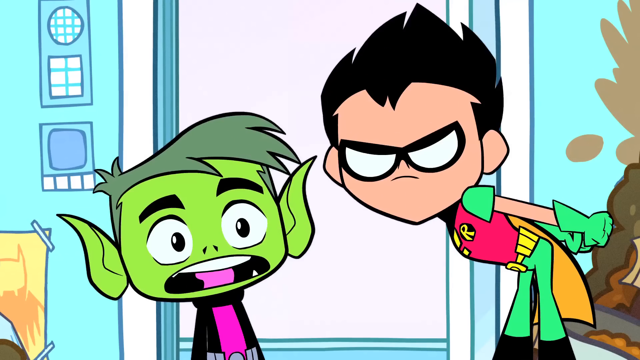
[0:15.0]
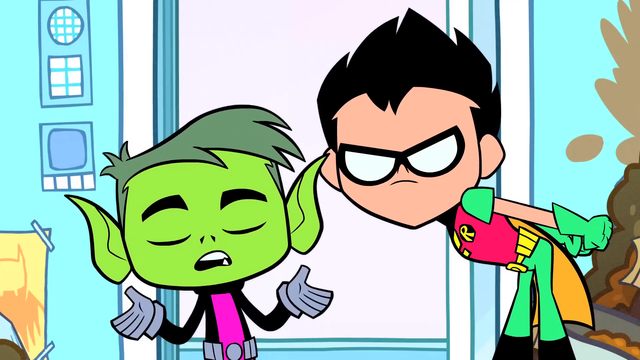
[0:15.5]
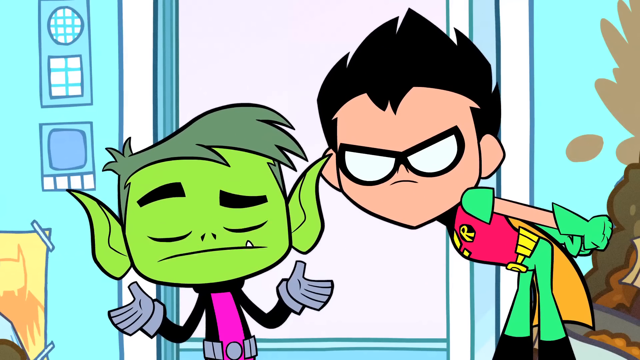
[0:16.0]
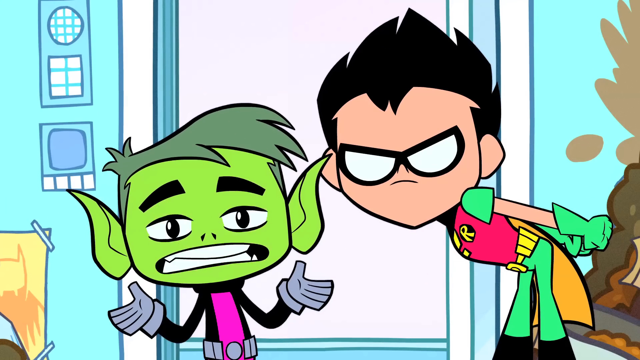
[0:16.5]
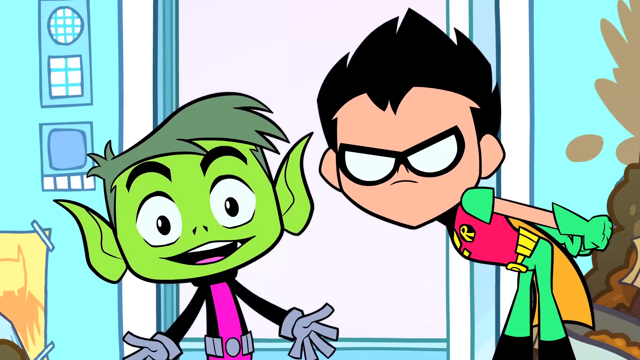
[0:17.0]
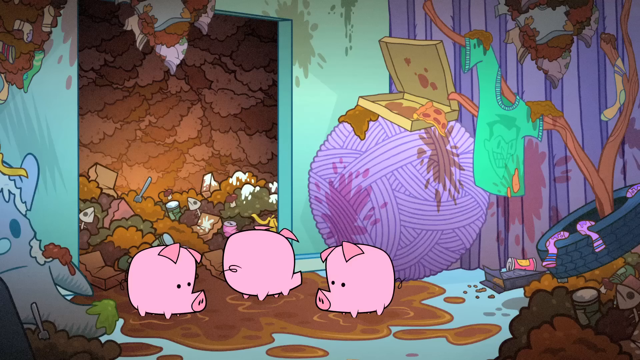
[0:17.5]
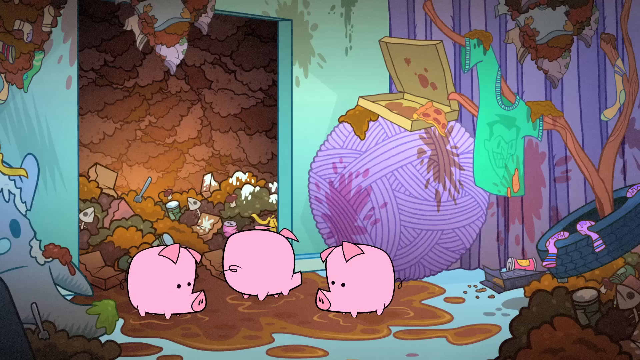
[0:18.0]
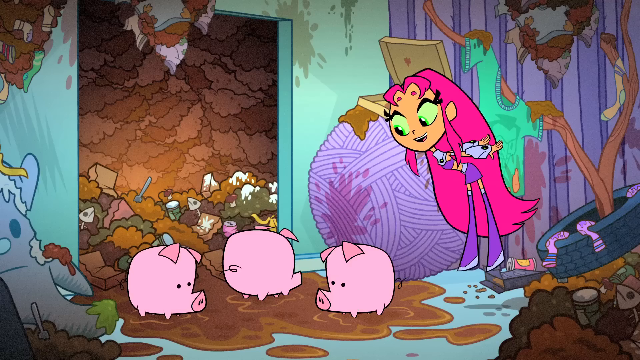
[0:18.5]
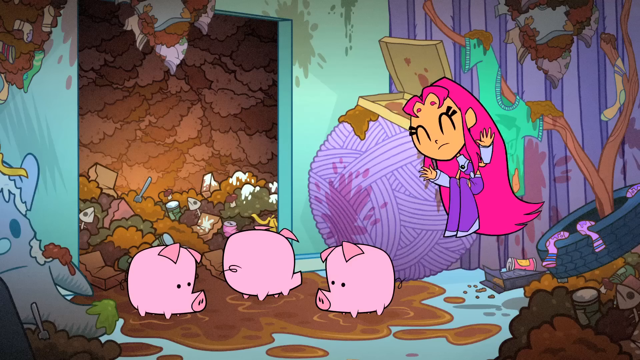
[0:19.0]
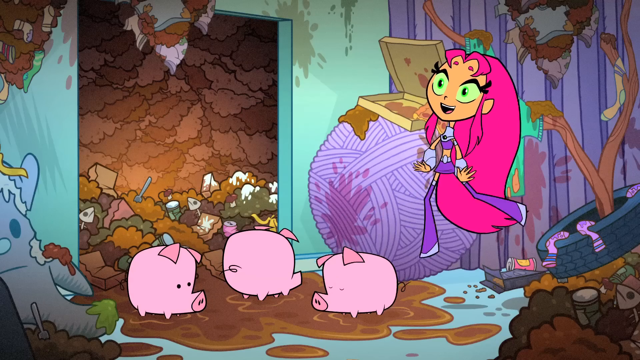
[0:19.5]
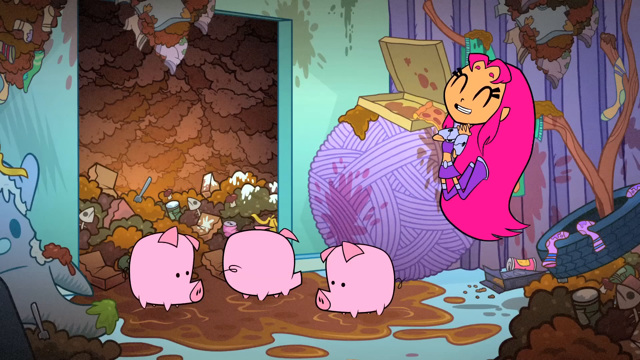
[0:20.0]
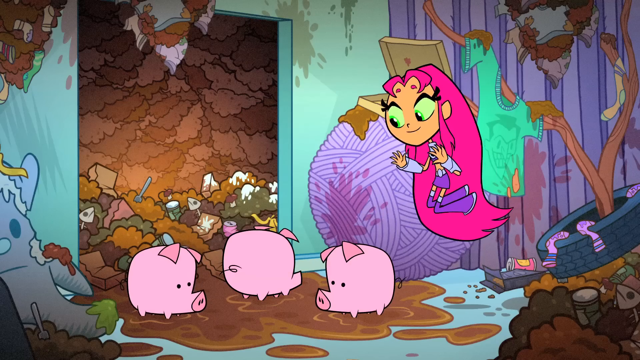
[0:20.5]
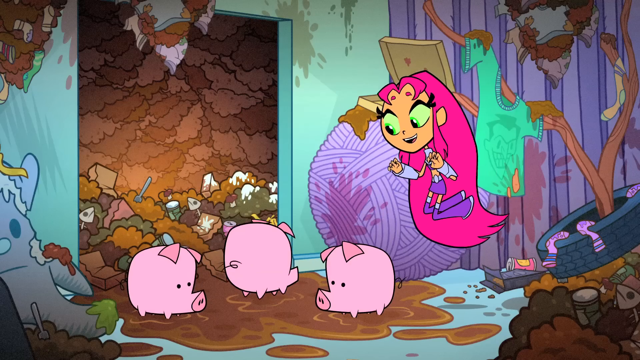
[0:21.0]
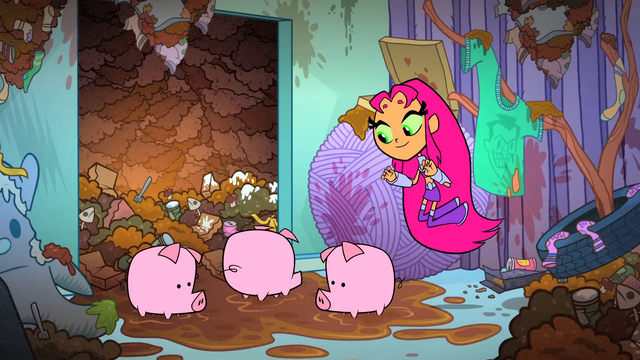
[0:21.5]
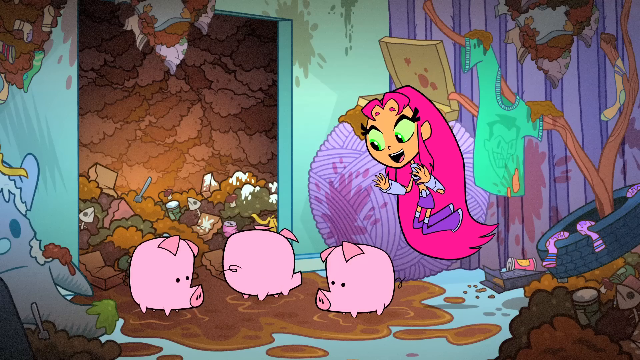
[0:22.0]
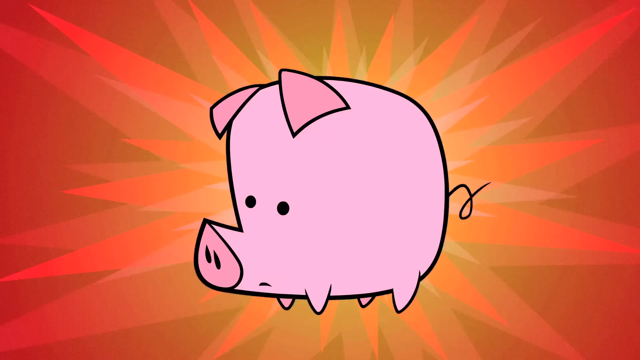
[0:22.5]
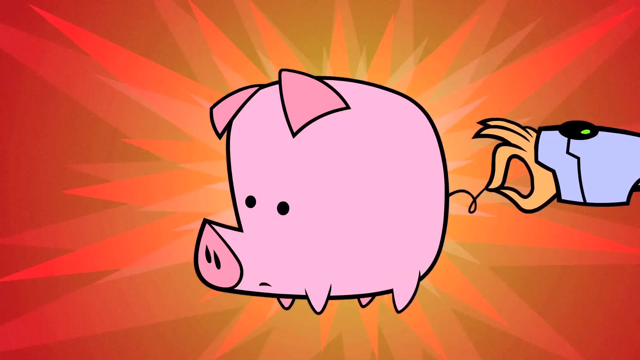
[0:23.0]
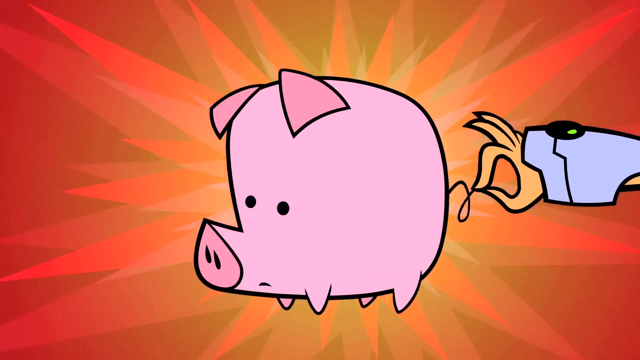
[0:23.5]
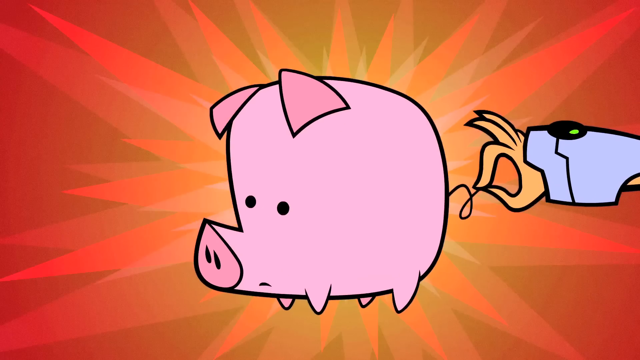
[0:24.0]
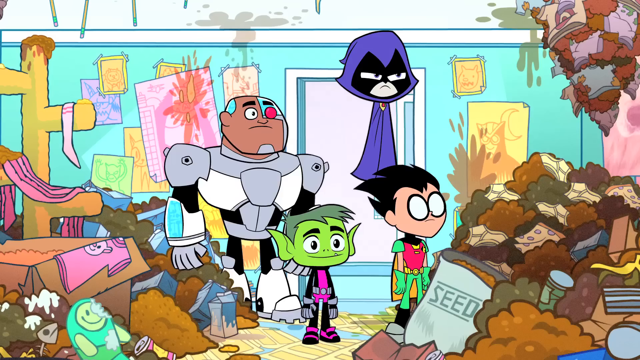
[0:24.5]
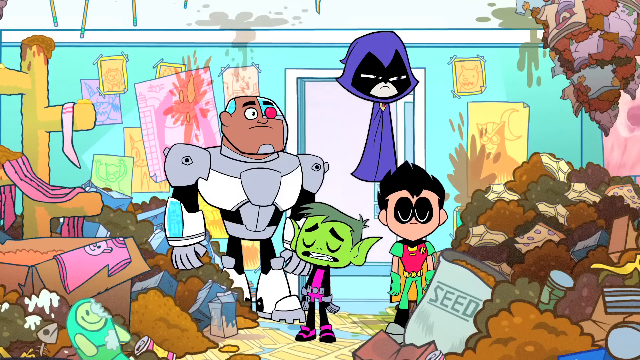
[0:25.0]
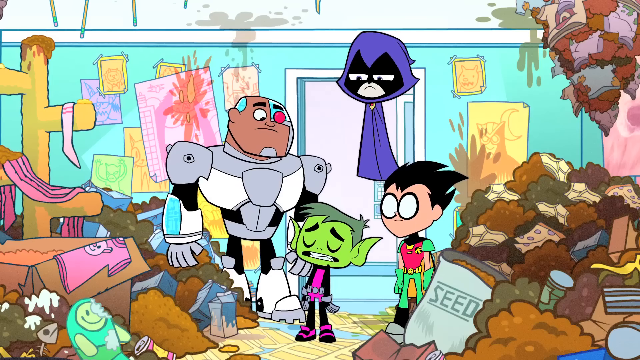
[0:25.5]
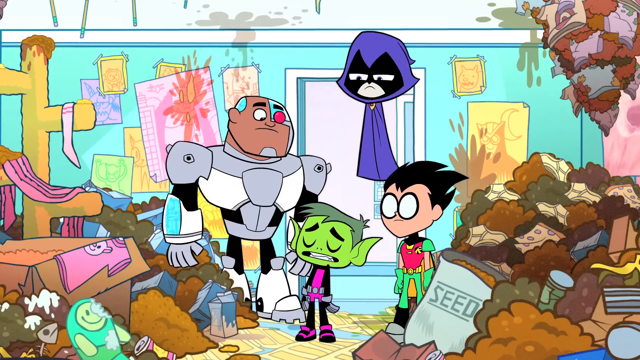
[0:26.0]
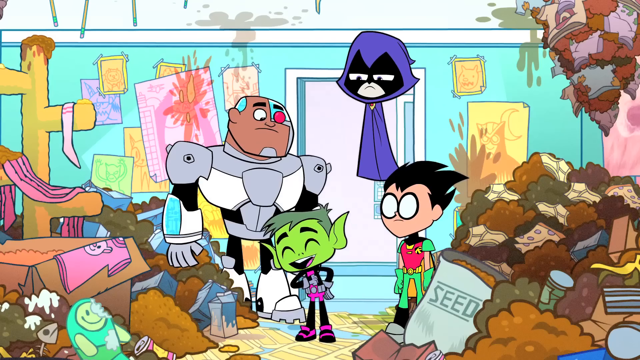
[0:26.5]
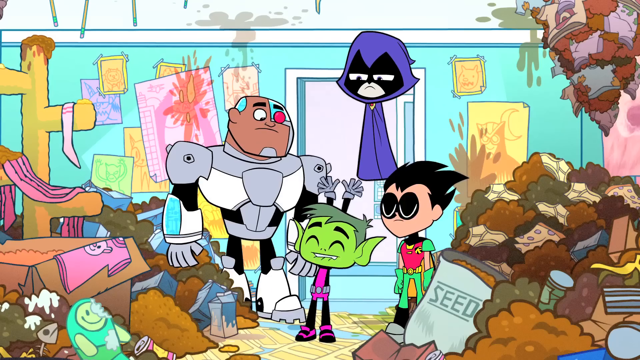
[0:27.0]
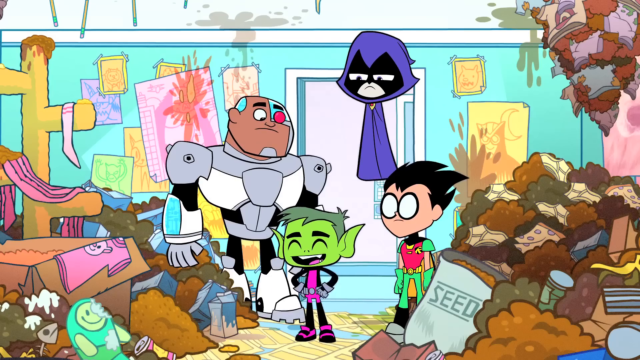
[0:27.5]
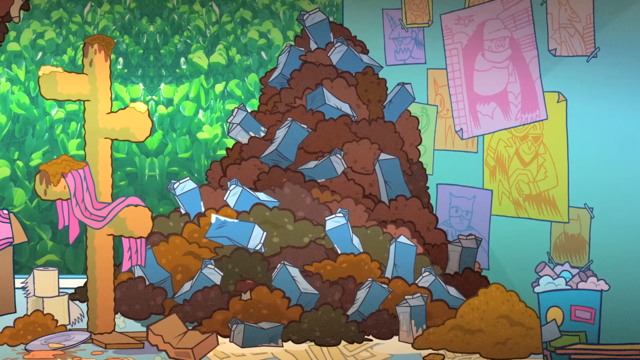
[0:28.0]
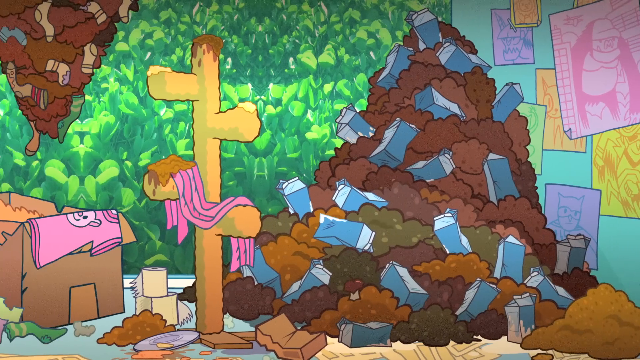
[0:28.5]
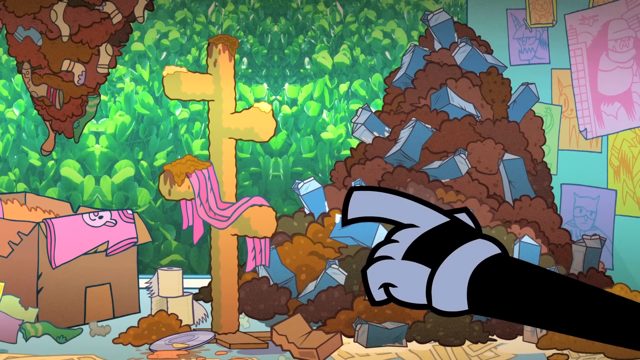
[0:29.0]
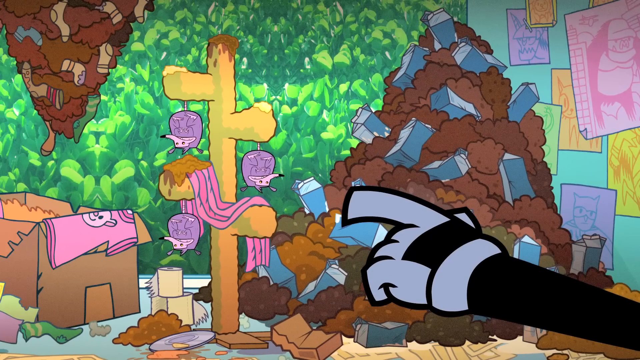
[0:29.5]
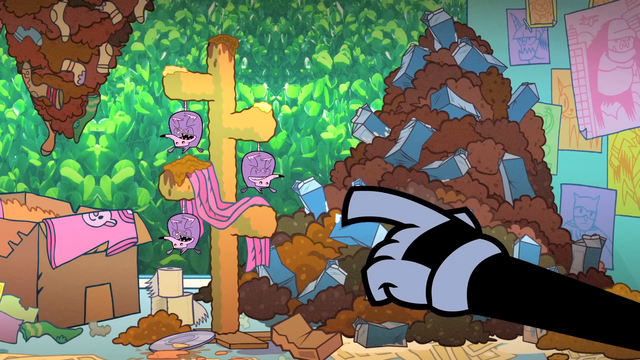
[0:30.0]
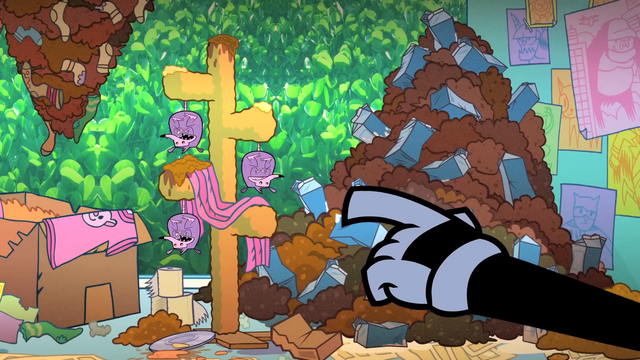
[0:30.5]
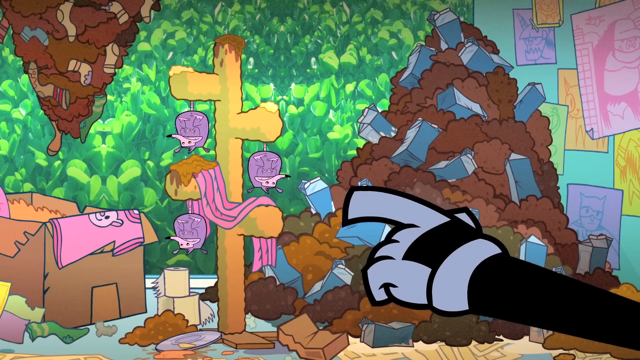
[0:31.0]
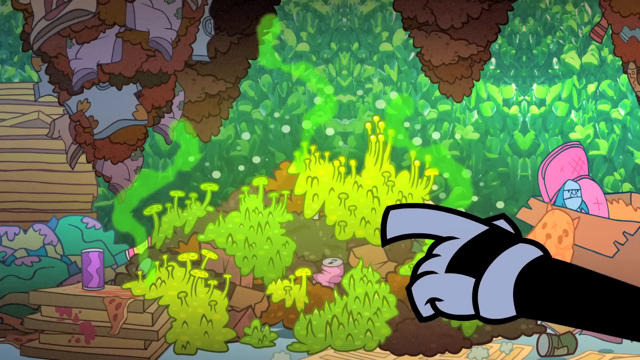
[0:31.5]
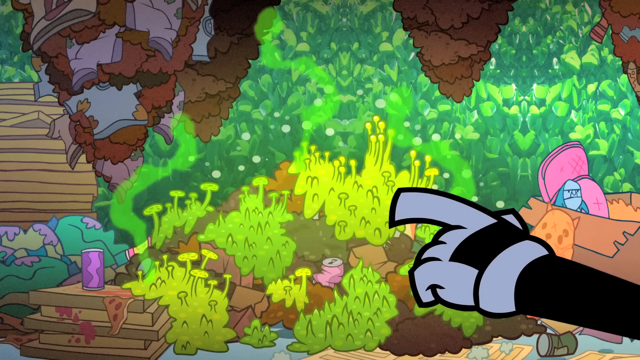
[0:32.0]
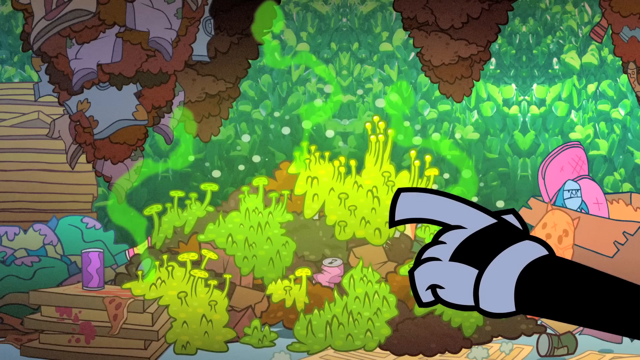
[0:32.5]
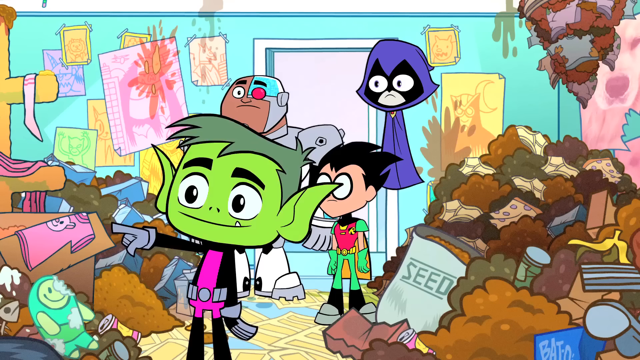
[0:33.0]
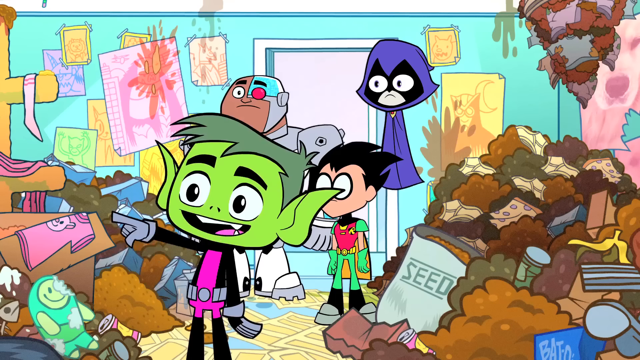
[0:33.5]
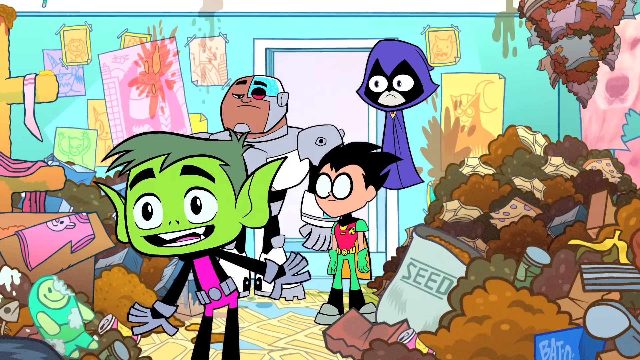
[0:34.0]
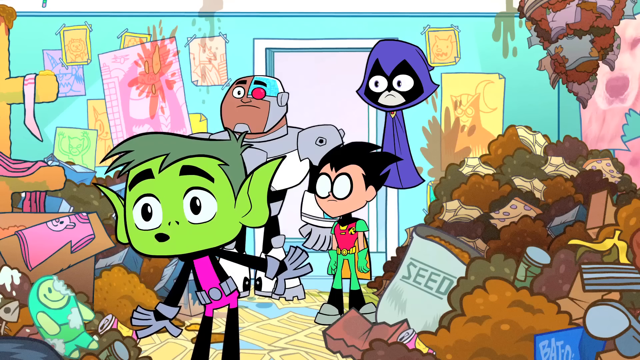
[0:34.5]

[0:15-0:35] These scenes come from the kids' animated series Teen Titans Go, which features superhero characters in very bright, colorful visuals. Beast Boy and Robin are on screen talking to each other, then turn and talk toward the screen as if addressing the audience. The scene transitions to a pig pen area, where filth is lying all around a tree with a t-shirt hanging on it, a ball of yarn is in the background, and three little pink pigs are in some mud. Starfire, a character with bright pink hair and purple coloring on her outfit, boots and skirt, flies into the screen. A very zoomed-in shot then shows a pink pig with its little curly tail against an orange background, as Starfire's hand grabs the tail and pulls it, and the pig seems to react to its tail being pulled. The video then cuts back to some of the other characters in a very filthy room surrounded by disgusting garbage all over the place.